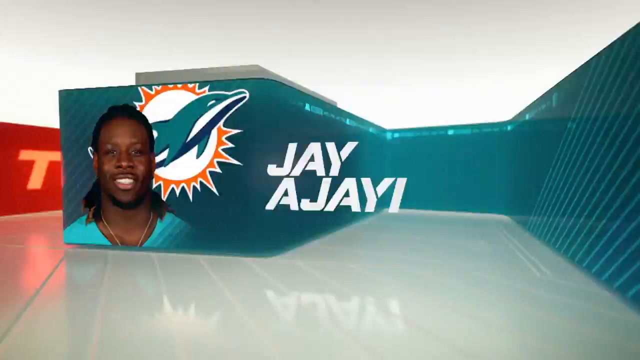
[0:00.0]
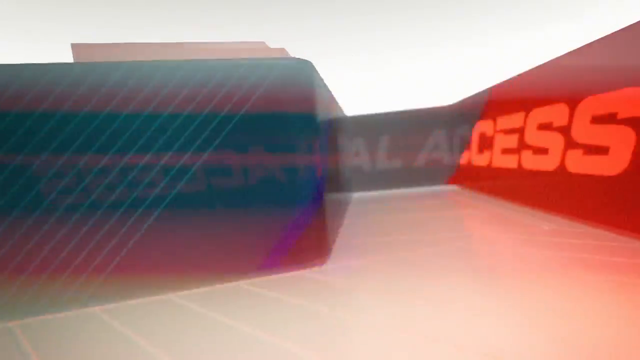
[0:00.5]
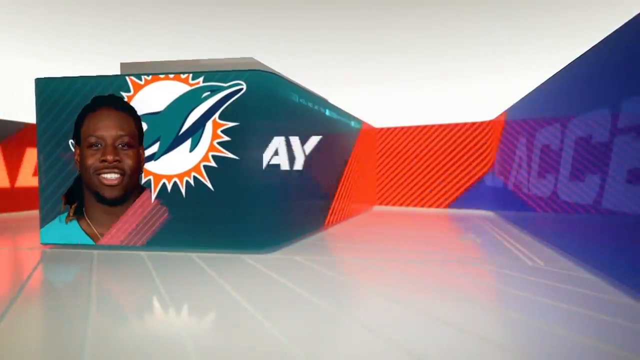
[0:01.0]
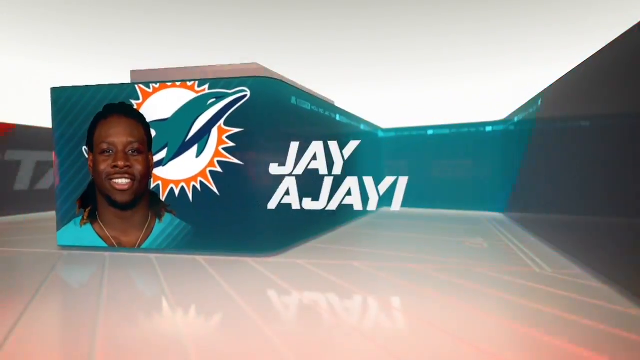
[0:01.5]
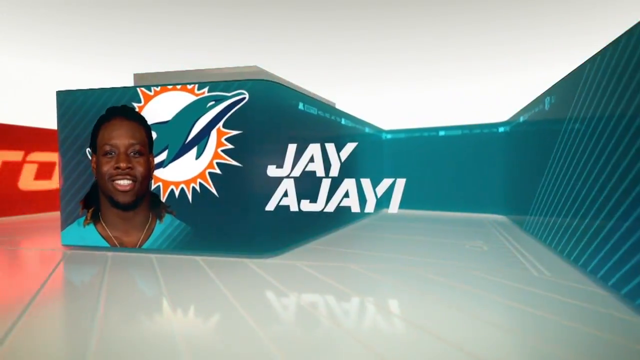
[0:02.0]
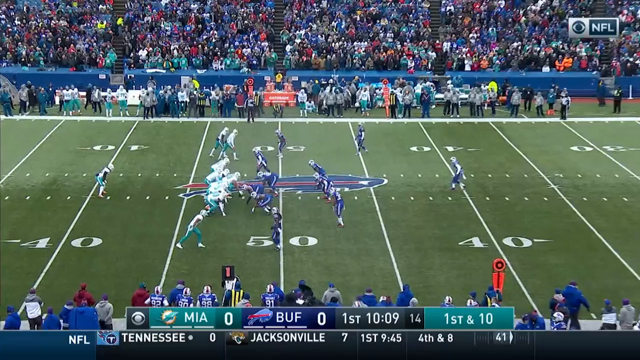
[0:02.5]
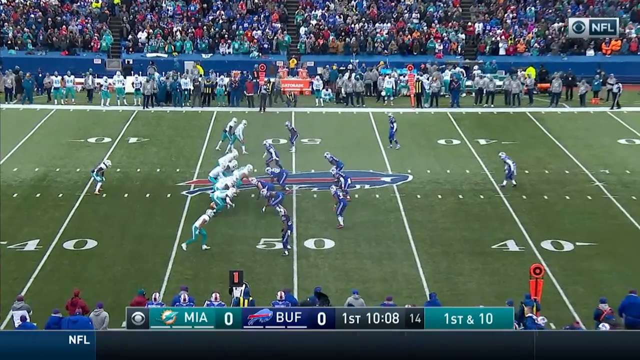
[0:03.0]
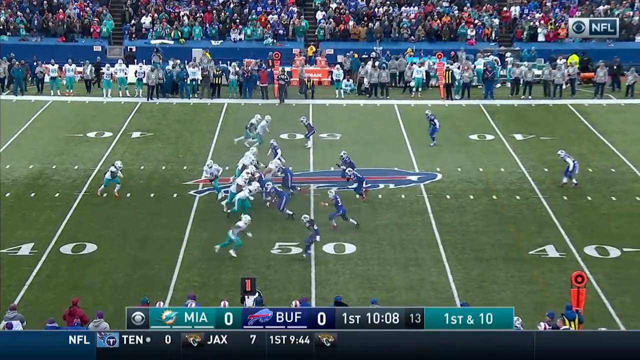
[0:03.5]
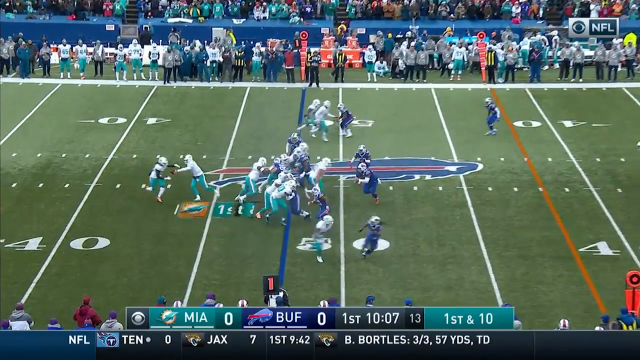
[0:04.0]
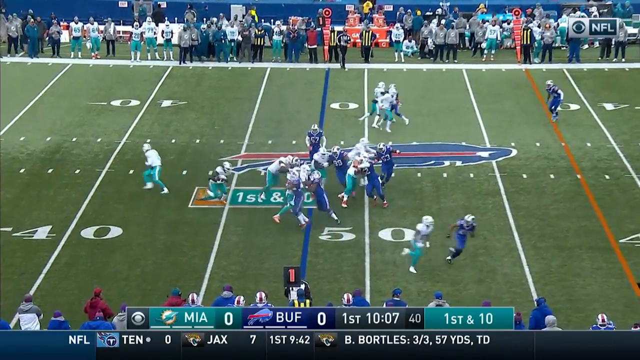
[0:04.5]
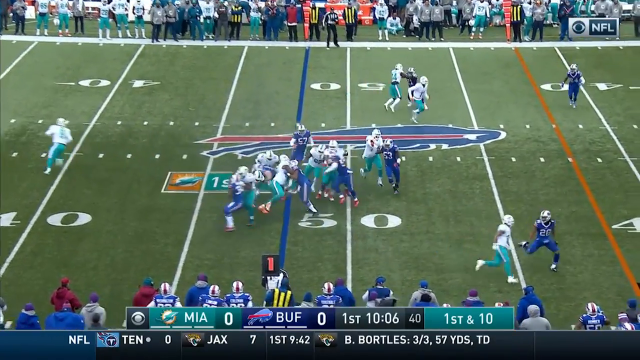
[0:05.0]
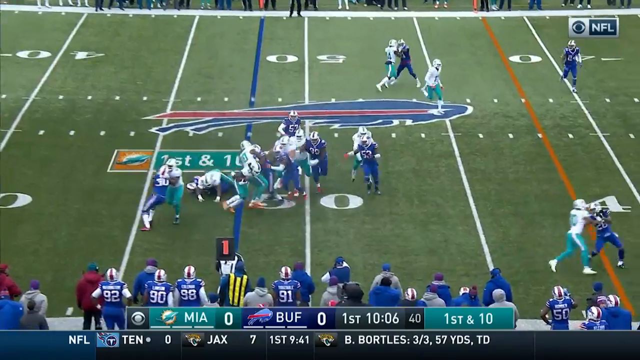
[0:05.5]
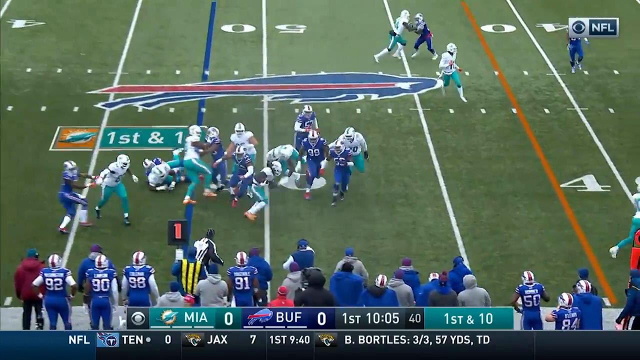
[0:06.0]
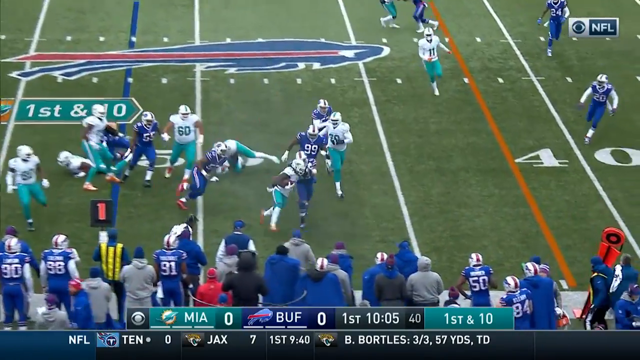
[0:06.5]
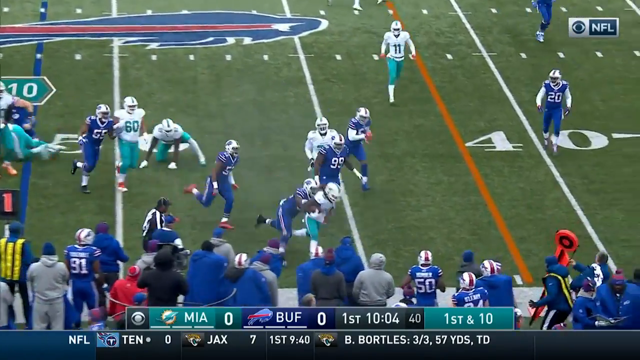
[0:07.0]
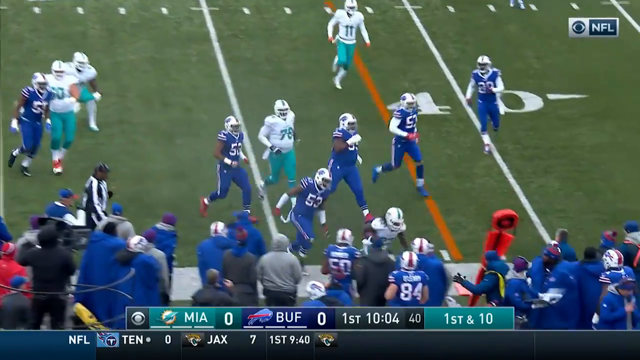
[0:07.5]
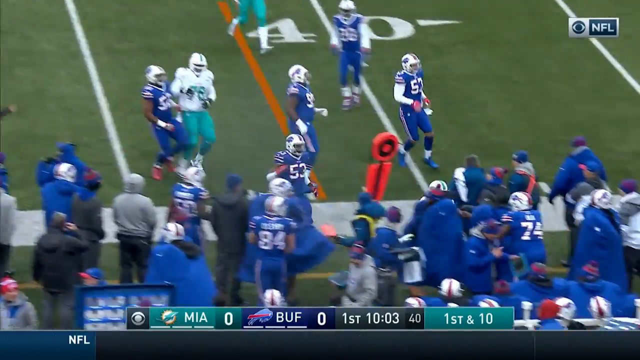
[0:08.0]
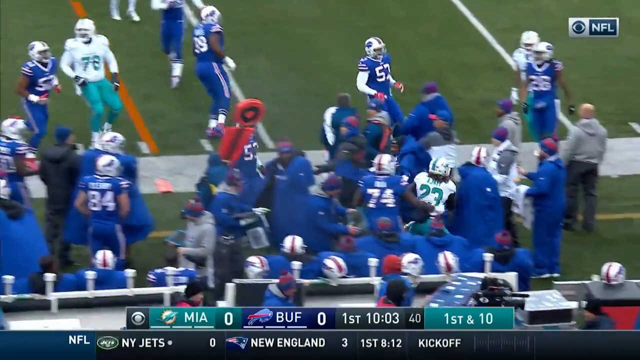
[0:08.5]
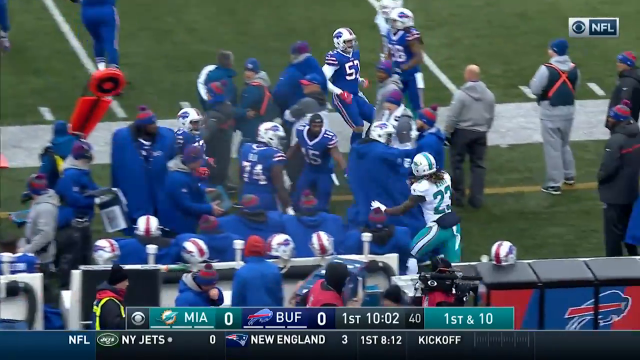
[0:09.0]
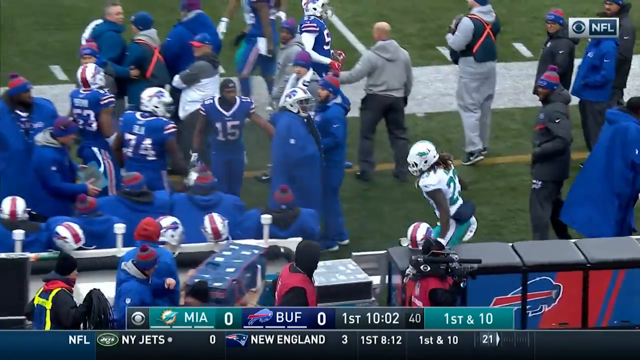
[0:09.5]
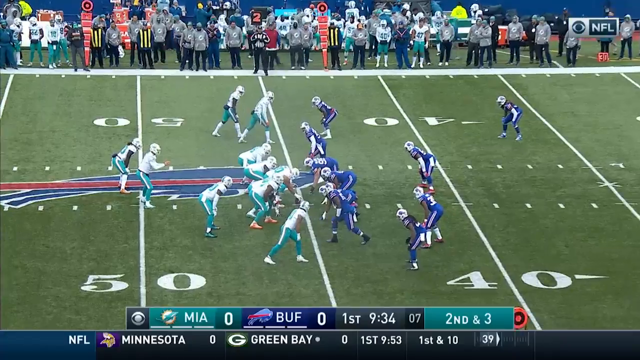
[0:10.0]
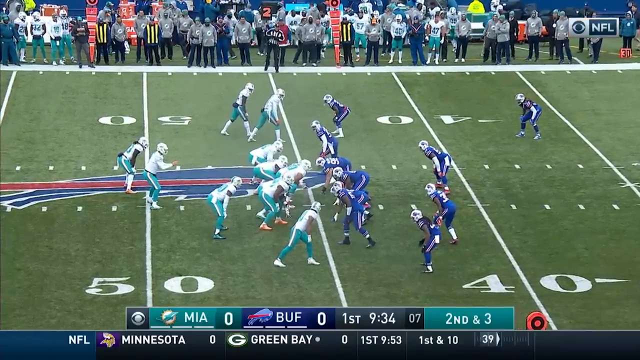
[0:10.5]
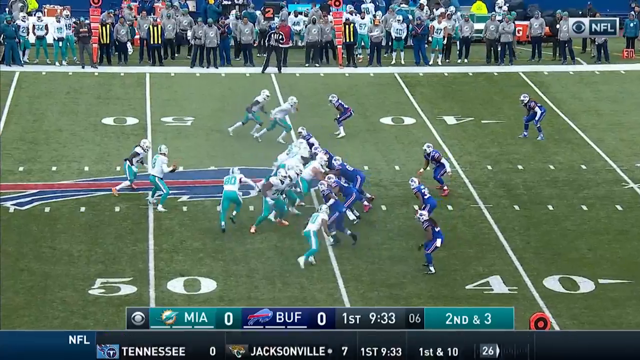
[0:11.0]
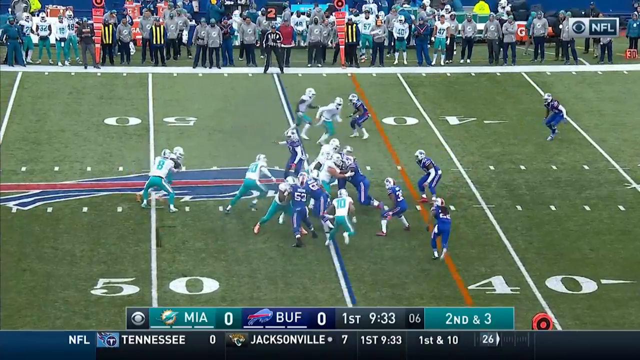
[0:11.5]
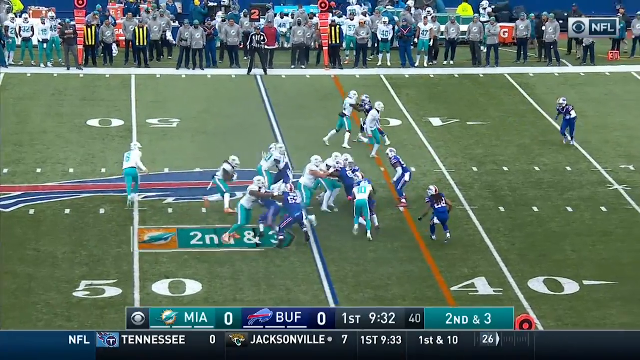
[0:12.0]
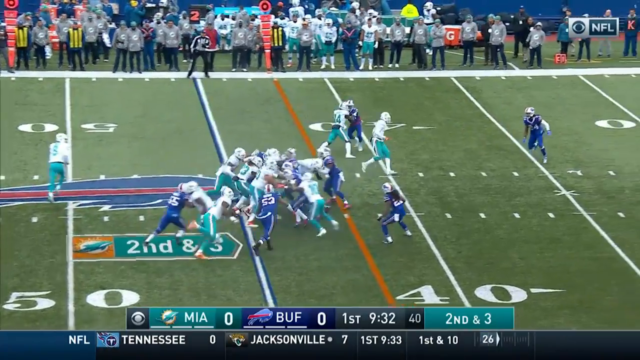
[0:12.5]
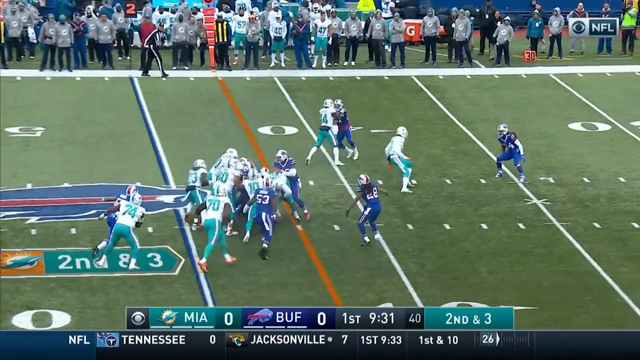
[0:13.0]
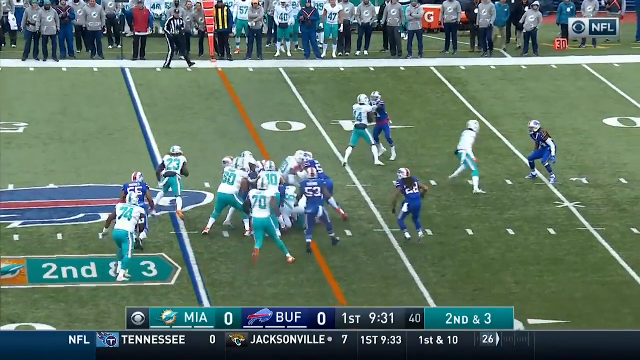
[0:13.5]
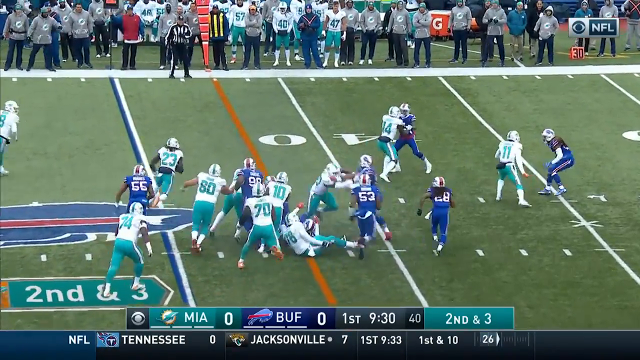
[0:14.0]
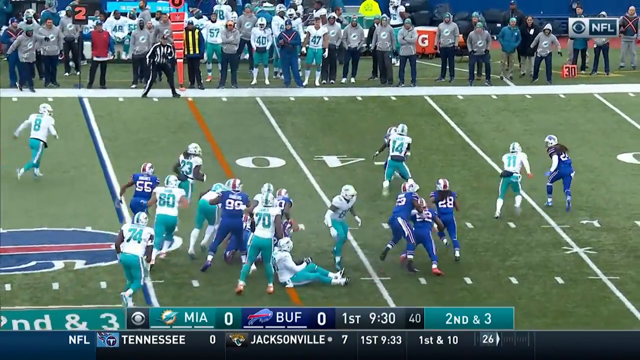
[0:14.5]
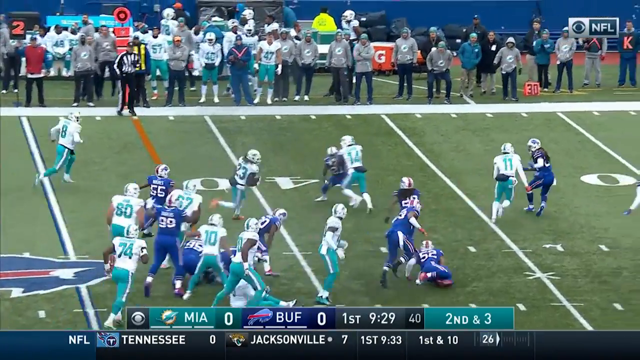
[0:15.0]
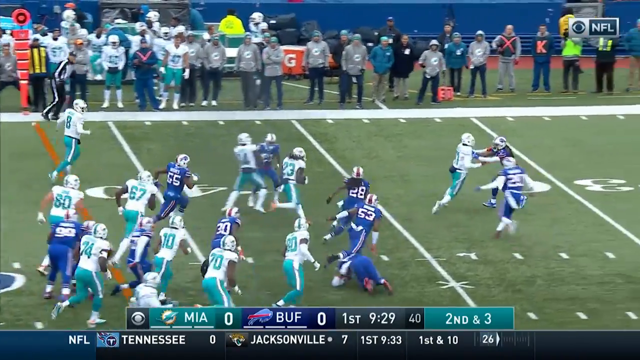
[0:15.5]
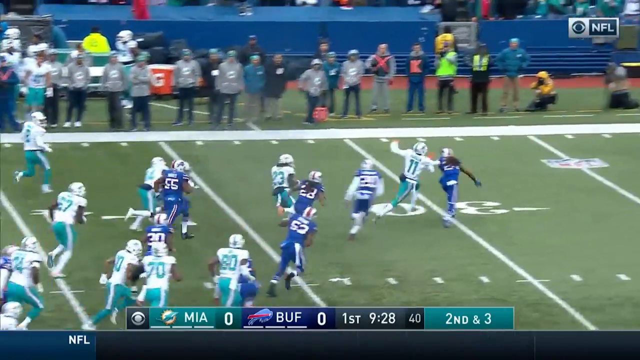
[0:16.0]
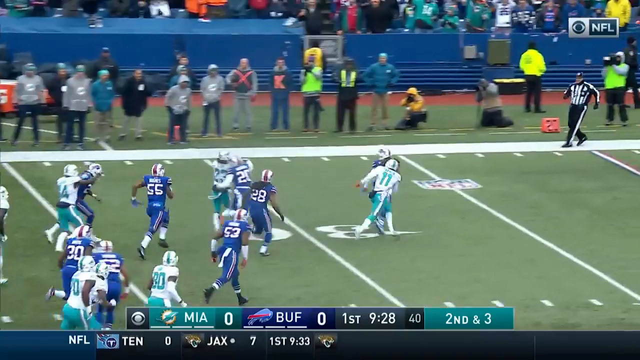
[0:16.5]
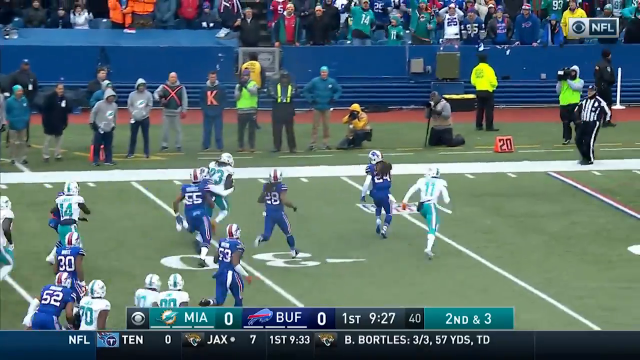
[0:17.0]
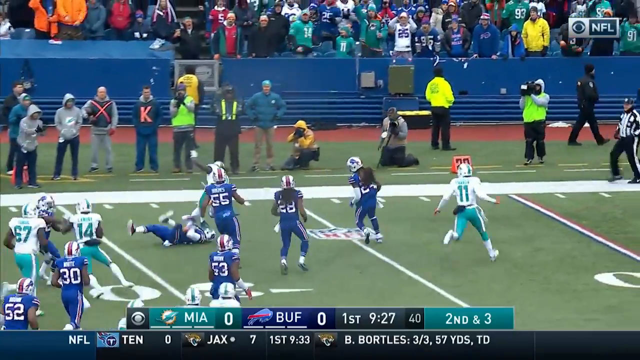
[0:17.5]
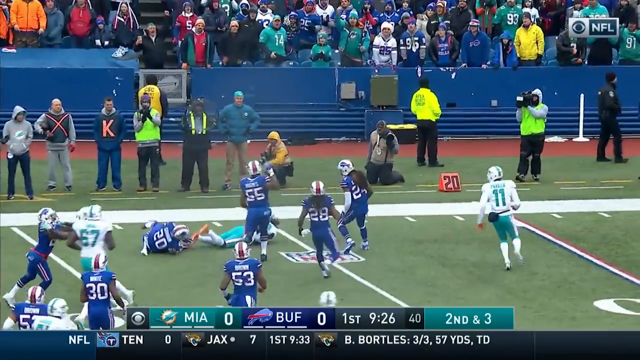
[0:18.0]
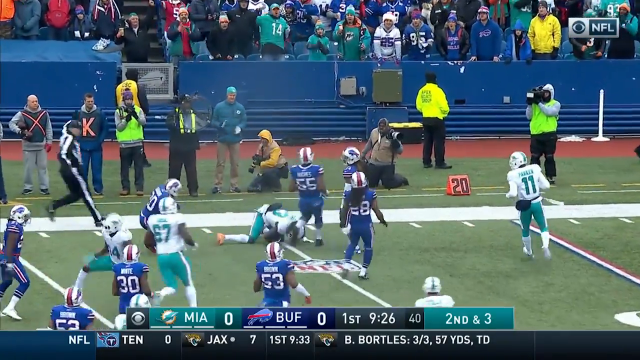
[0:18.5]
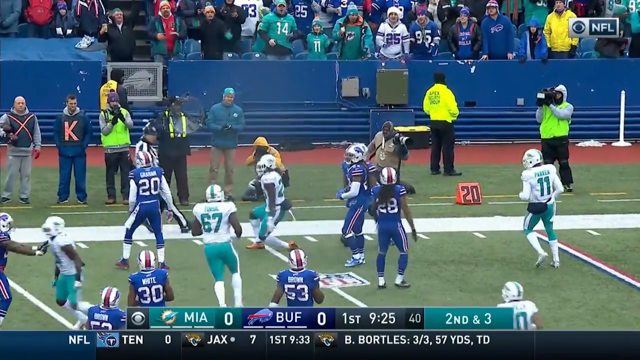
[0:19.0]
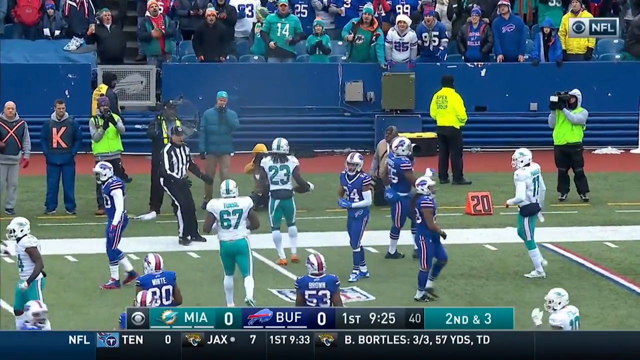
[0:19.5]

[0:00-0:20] A digital profile of an American football player appears on screen, labeled "Jay Ajayi." He has dark skin and long dark hair, and wears a gold chain and a light blue shirt; behind him is a picture of the Florida Dolphins. The video then cuts to highlights of an NFL game between Florida and Buffalo, with Florida in a white uniform. The quarterback hands off to a player who runs through the defense and around them before being tackled out of bounds. In a separate highlight, the quarterback again hands the ball to the same player, who runs straight at the defense and then cuts to the left while a player is placing blocks. He gets quite far before being tackled, stumbling over while still inbounds. He is the same player seen in the profile picture at the start, and all the highlights are from a game against the Buffalo Bills.